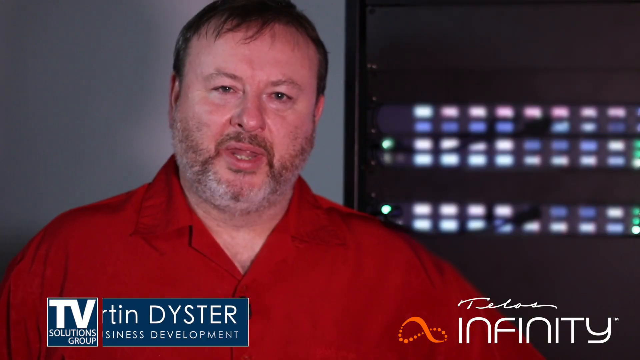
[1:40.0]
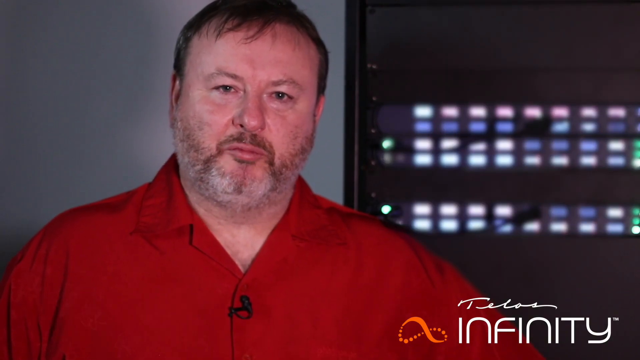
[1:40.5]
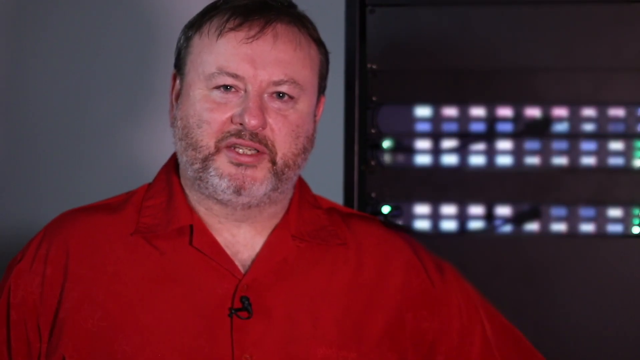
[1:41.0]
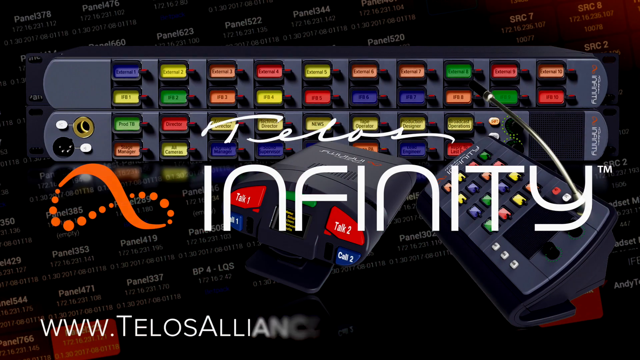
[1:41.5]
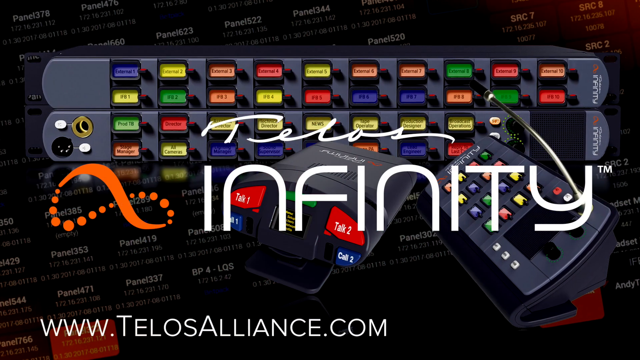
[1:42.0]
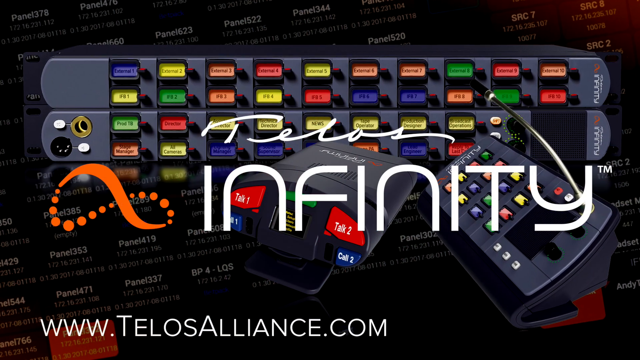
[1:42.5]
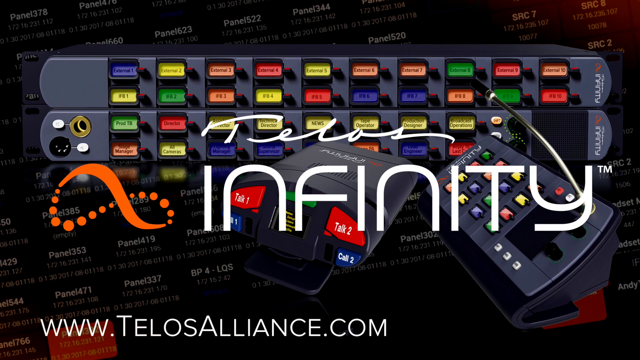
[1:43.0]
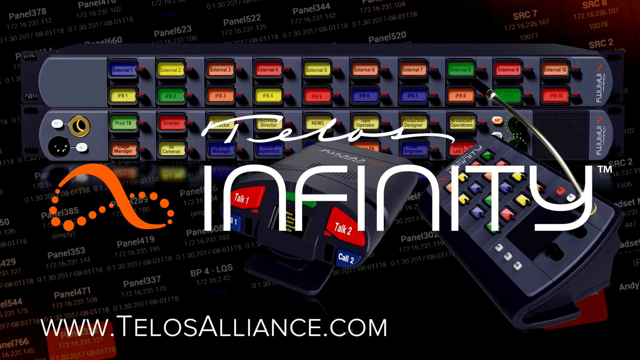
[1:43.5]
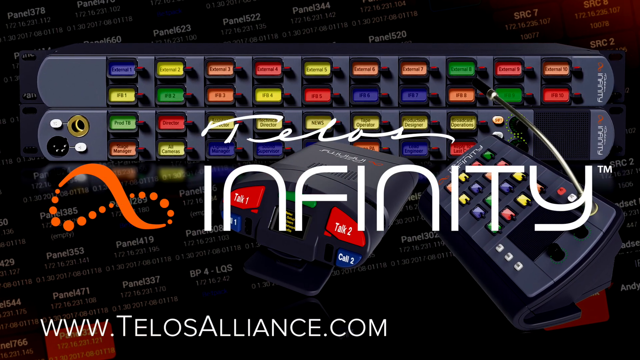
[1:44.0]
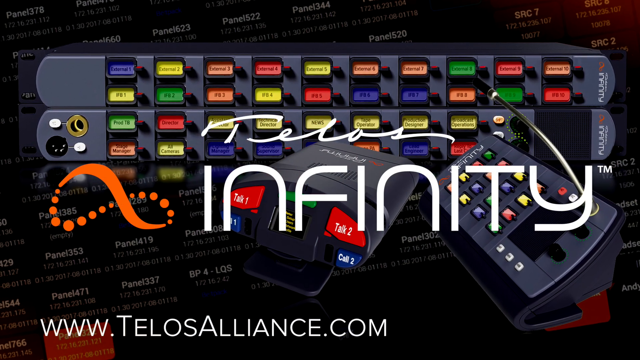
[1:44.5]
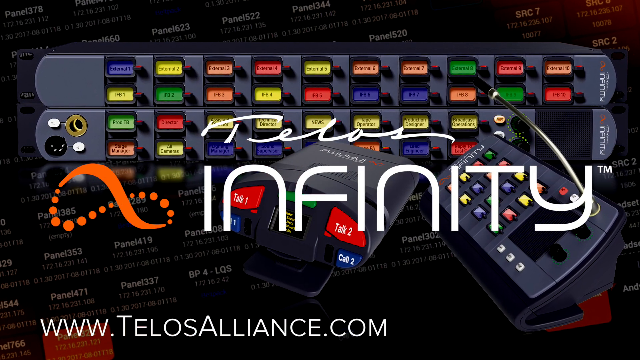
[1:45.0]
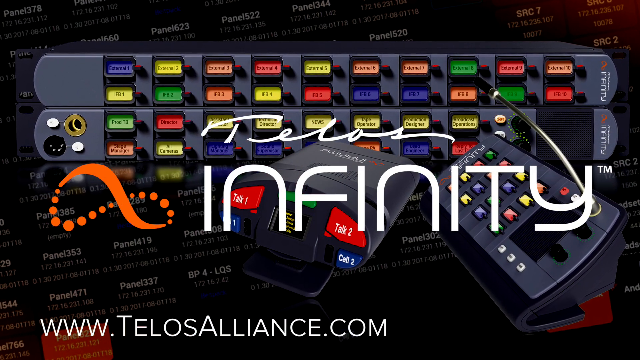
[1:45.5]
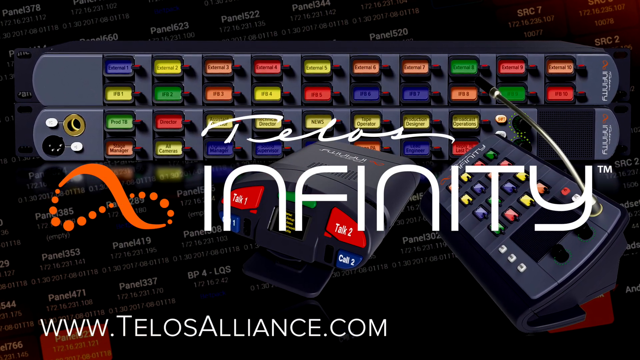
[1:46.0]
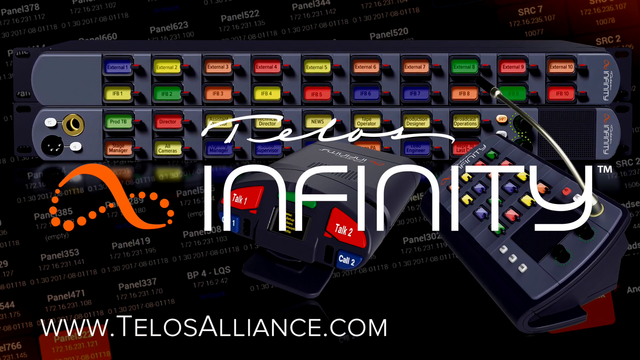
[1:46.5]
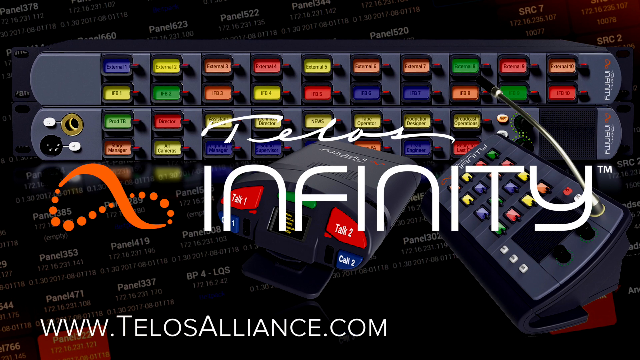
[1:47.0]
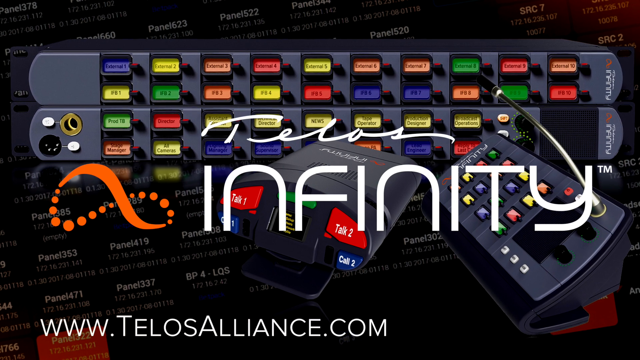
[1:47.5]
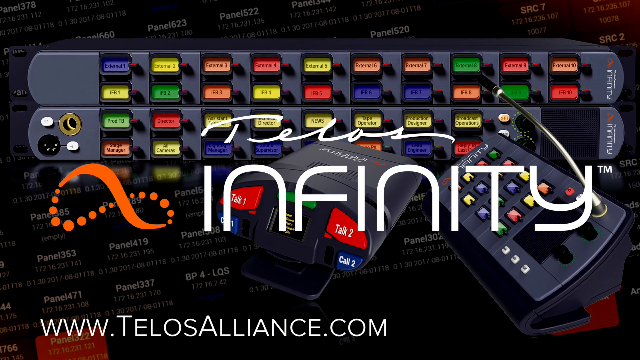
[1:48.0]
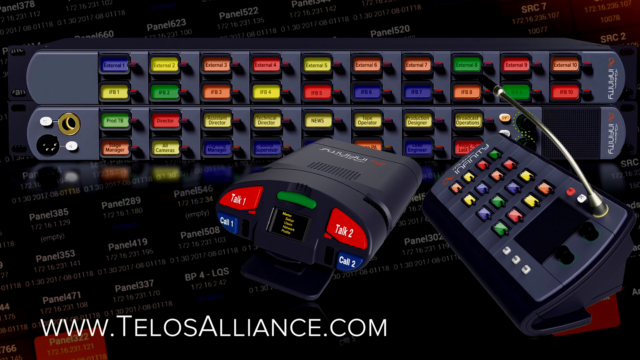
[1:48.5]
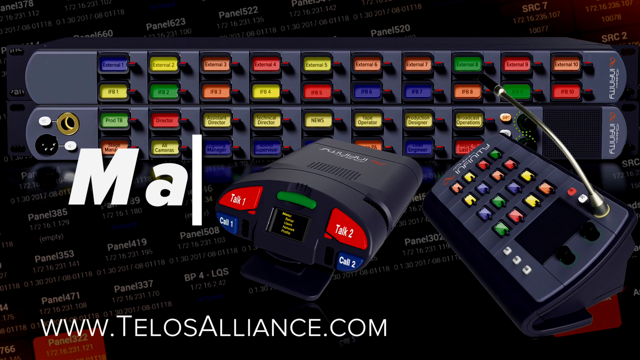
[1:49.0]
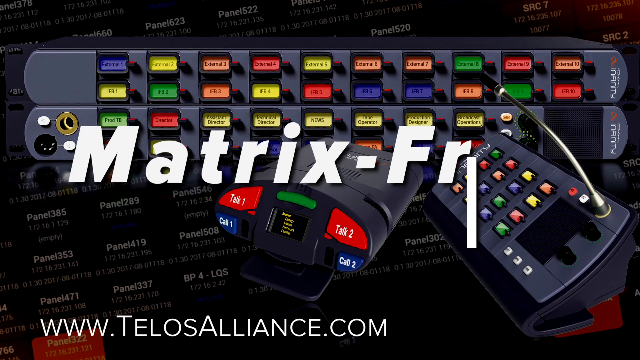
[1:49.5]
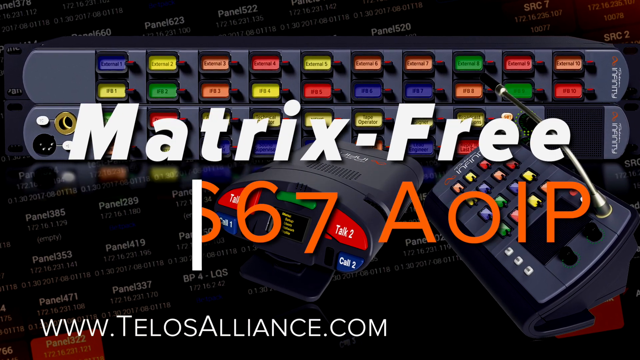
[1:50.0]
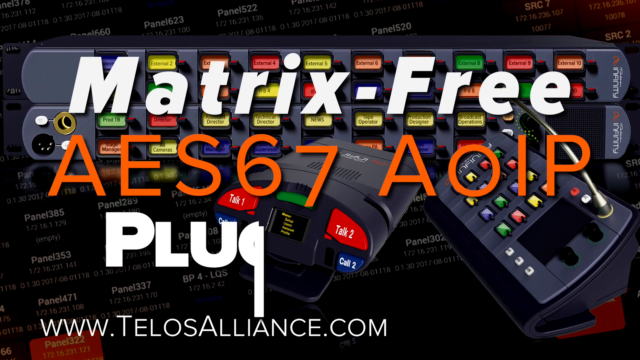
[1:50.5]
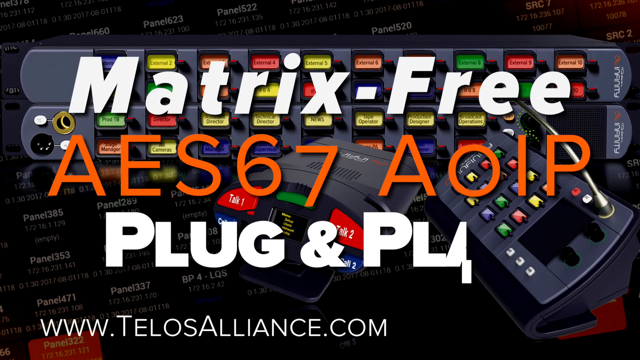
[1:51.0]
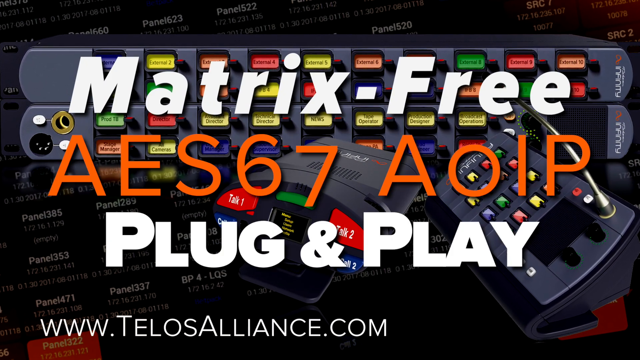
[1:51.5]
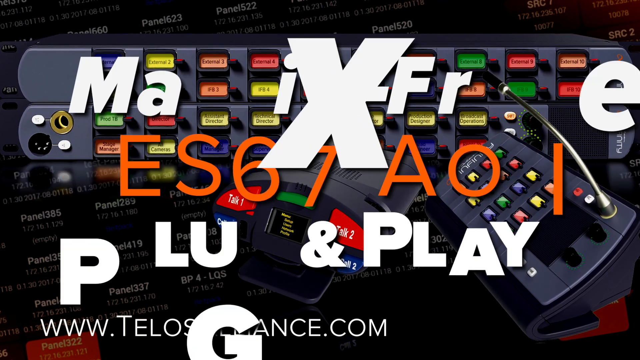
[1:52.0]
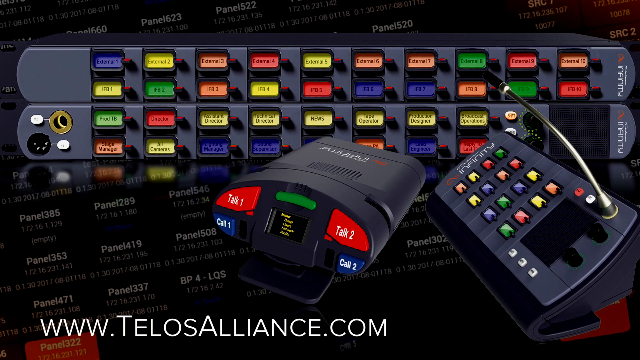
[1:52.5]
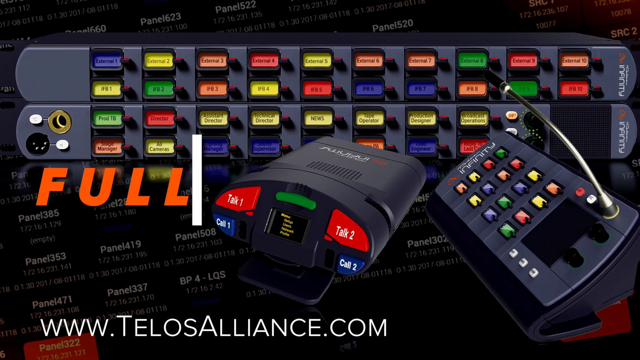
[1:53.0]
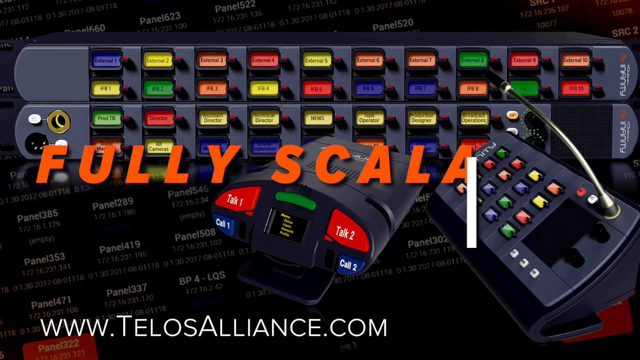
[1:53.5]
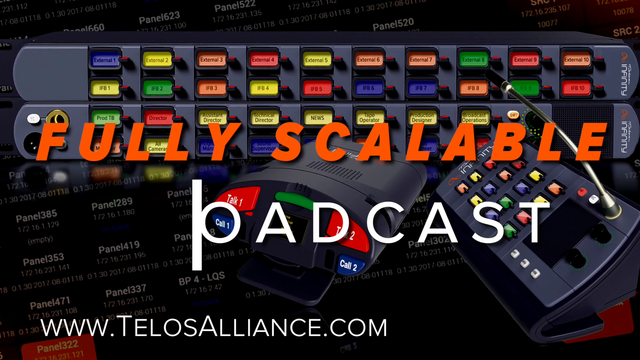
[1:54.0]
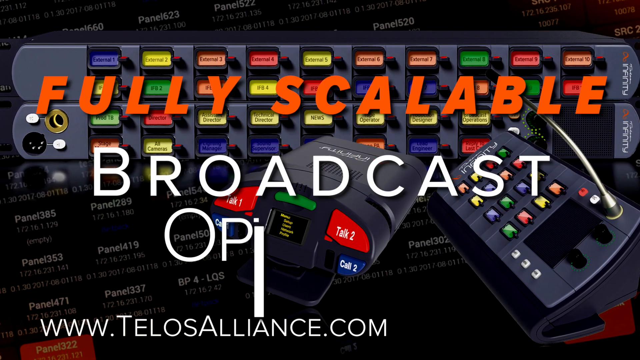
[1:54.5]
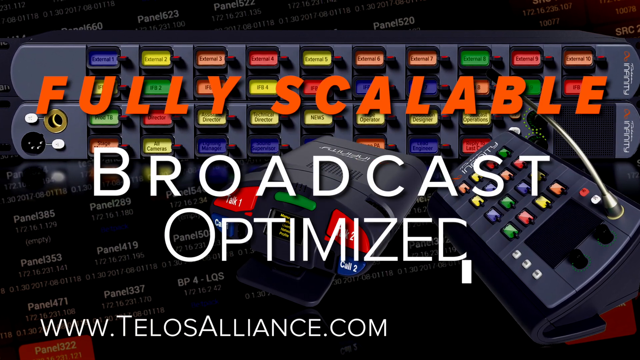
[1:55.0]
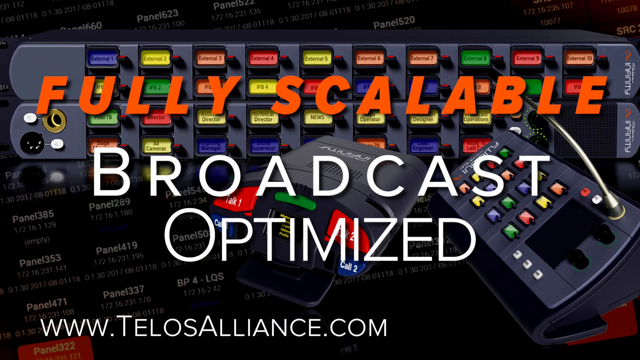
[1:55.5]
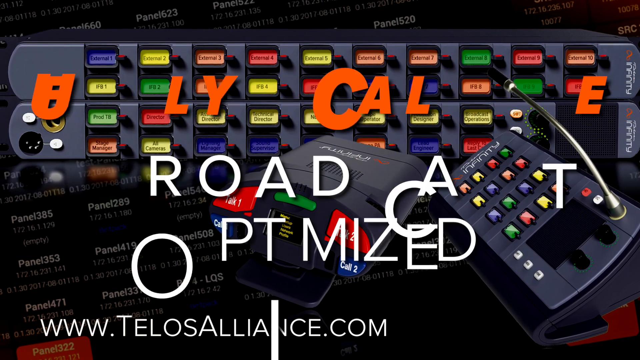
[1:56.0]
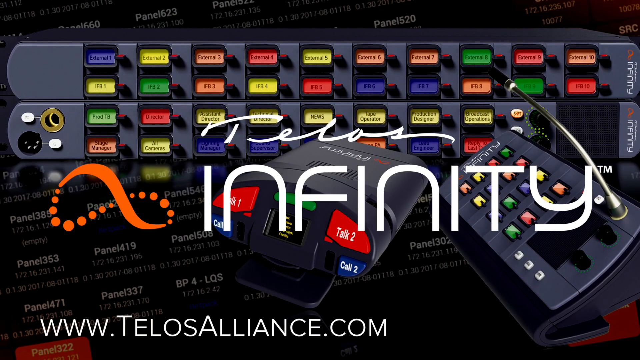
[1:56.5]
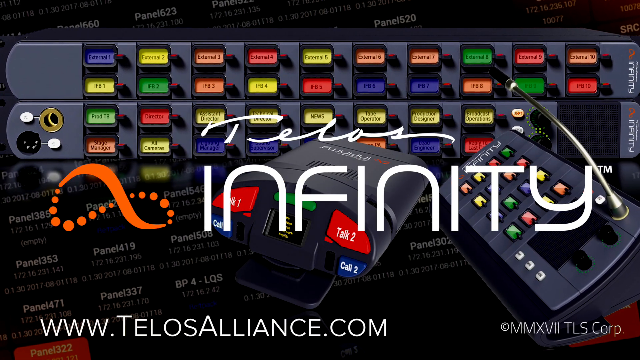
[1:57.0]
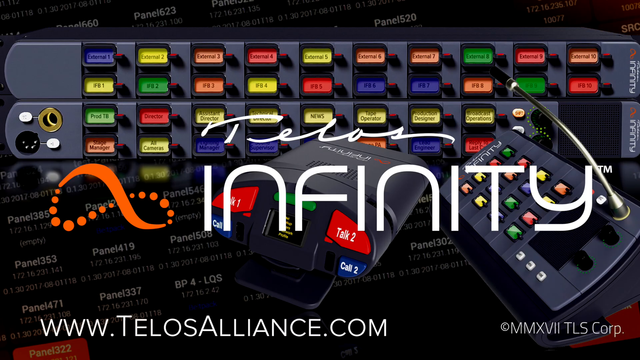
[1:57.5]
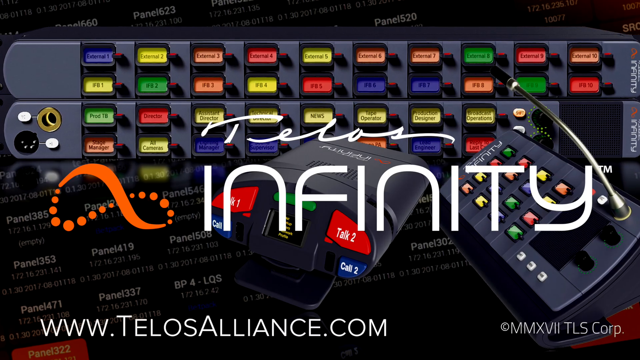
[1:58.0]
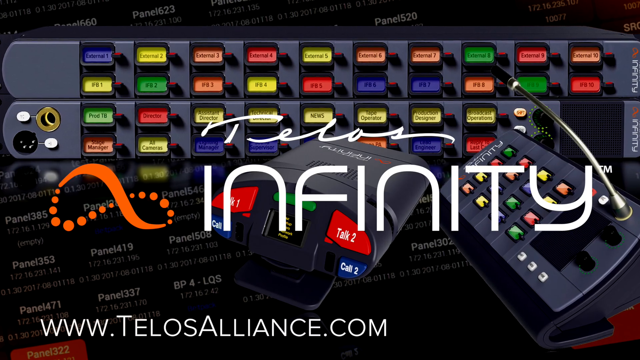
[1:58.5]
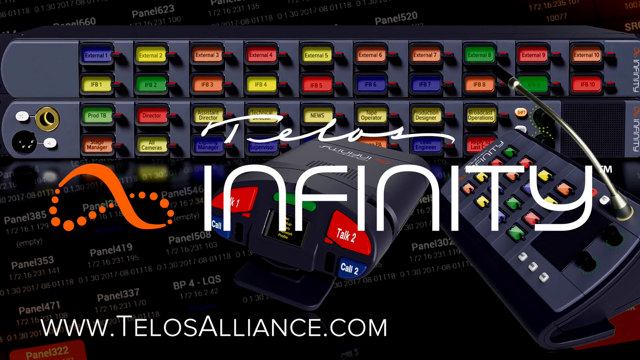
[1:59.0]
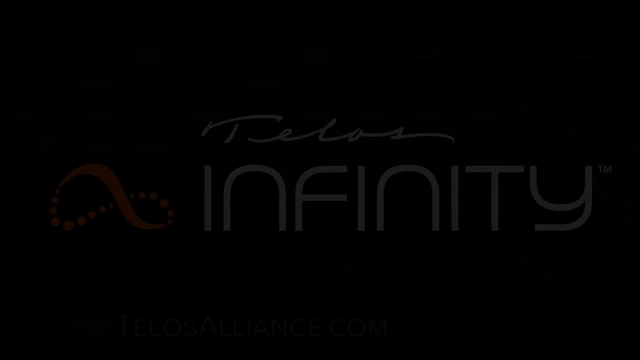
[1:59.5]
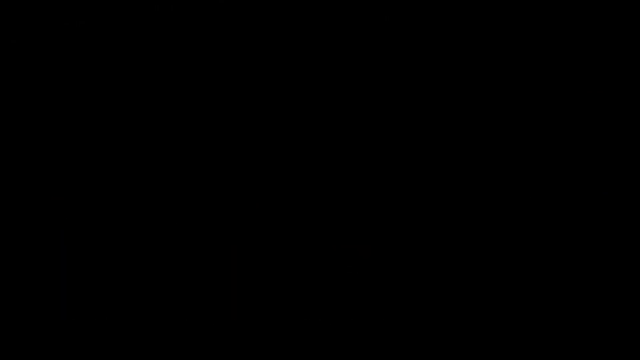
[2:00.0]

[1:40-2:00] A man in a red button-down shirt, with a mustache, beard and short cropped hair, speaks to the camera from the left side of the screen. Behind him, on the right side of the screen, is a device with four rows of buttons, then a space, then two more rows of buttons. The screen changes to a device with colorful buttons, with text over it saying "KELOS INFINITY". New text appears saying "Matrix Free AES67 A0IP Plug and Play". That text disappears and new text says "Fully Scalable Broadcast Optimized". The screen then returns to "Tesla's Infinity". A device with rows of colorful buttons is behind all of these text screens that end the video.